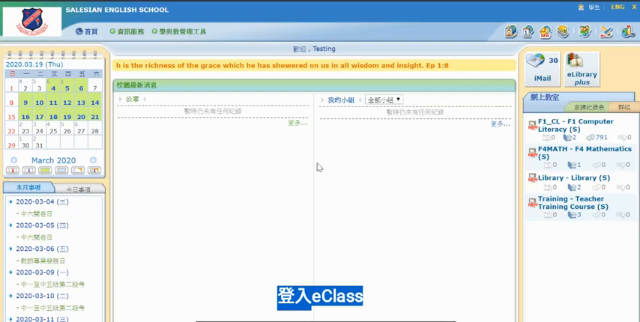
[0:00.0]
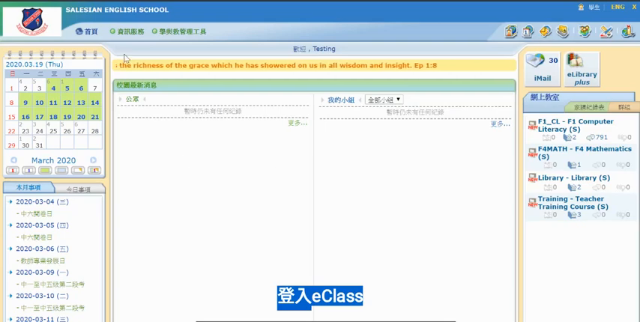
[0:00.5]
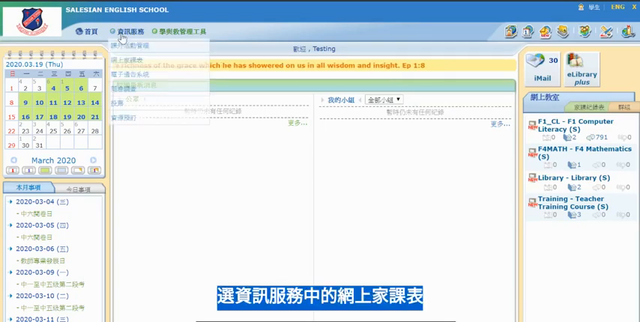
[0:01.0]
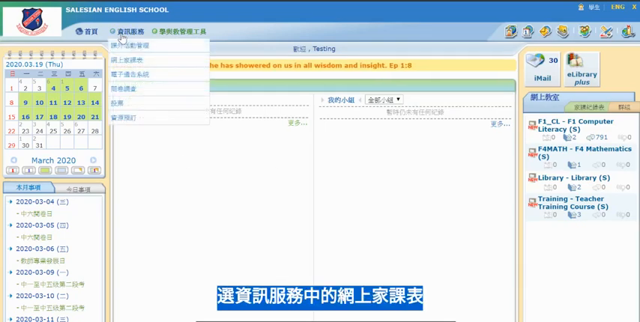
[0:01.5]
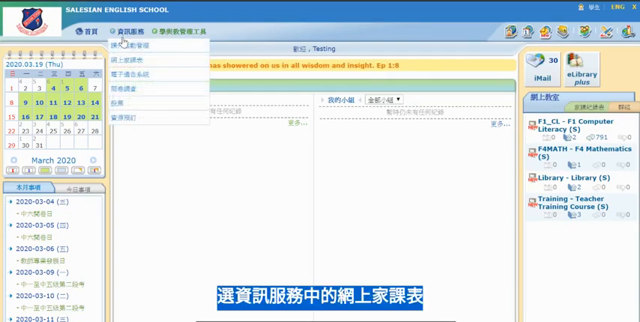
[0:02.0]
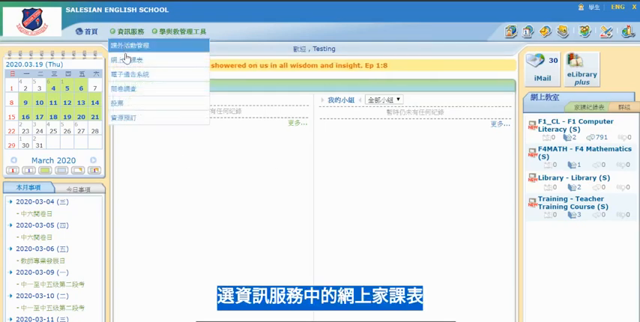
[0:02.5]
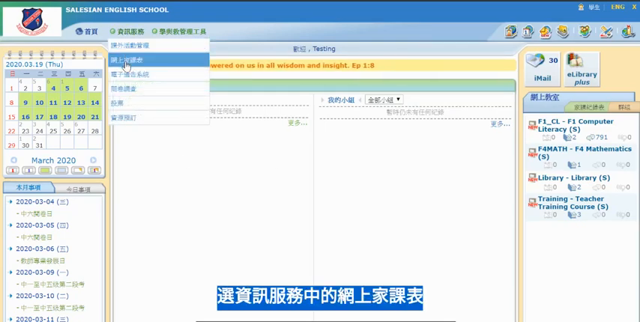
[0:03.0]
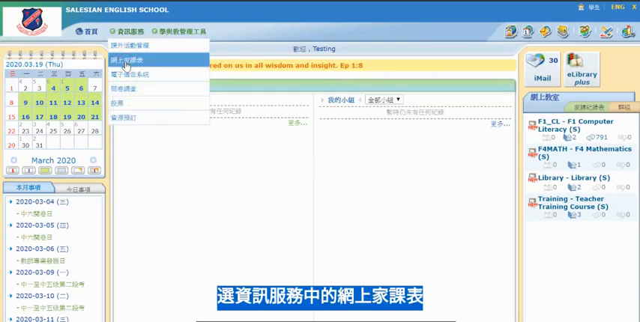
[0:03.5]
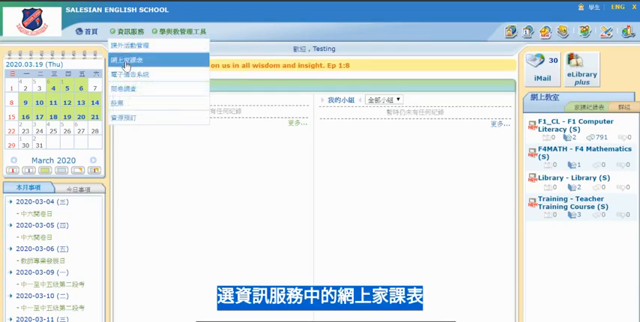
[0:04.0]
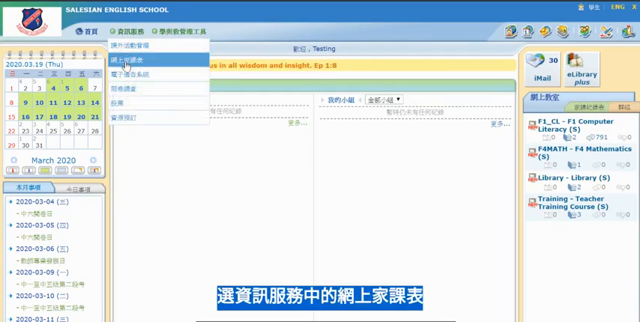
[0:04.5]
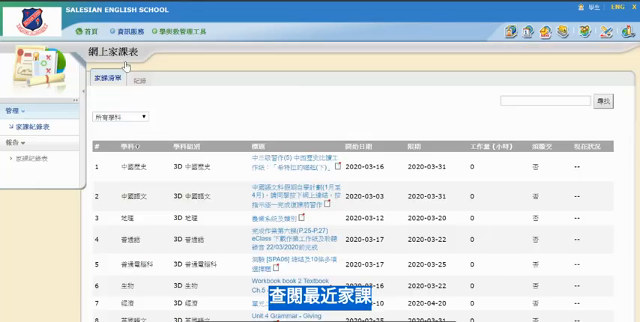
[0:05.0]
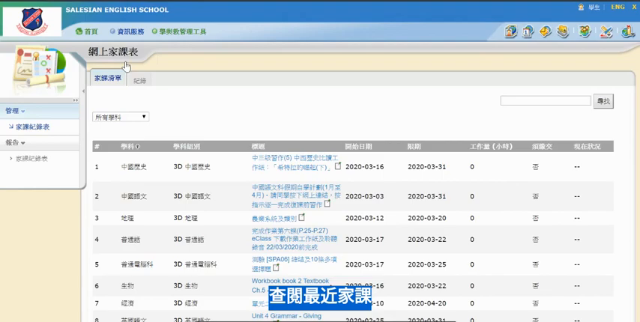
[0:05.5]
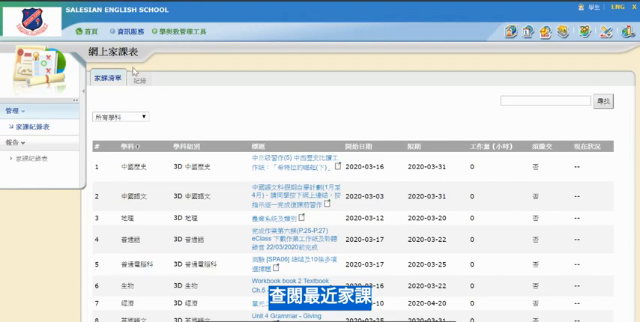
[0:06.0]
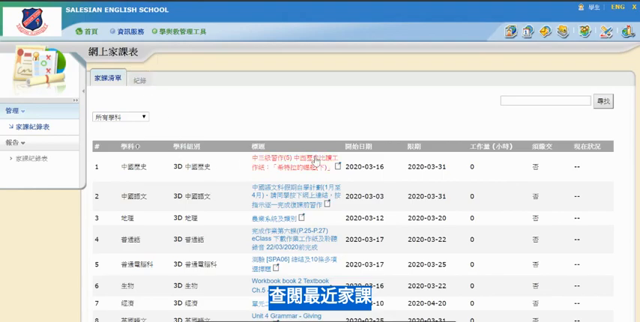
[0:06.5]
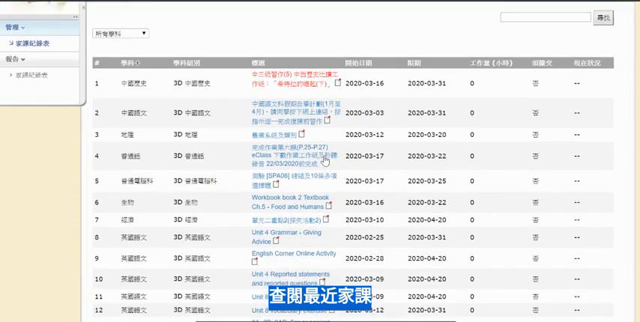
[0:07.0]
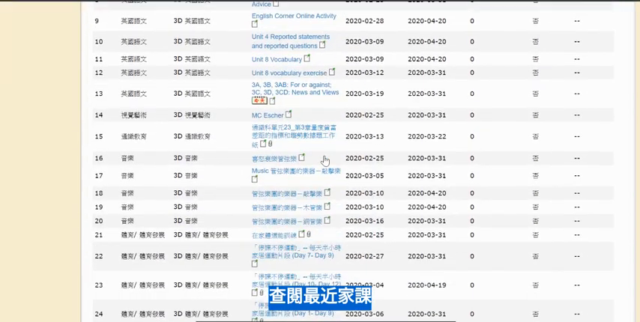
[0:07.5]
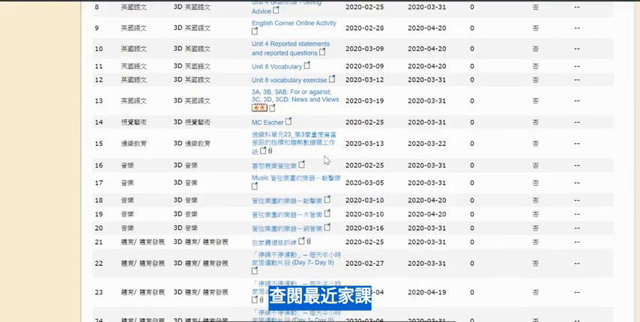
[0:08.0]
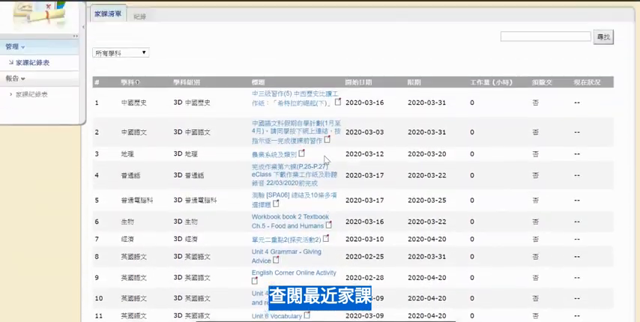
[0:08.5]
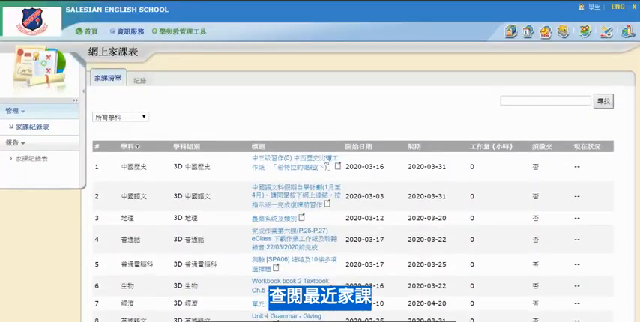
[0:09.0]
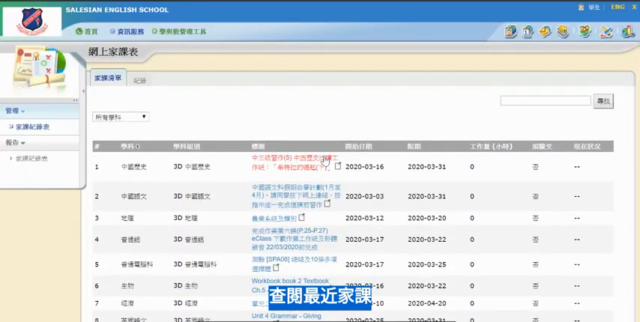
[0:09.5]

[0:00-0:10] A person is looking at some type of schooling app, with "Salesian English School" at the top of the screen. The rest of the text, including the headings, captions and filenames, is in Chinese. The user goes to the top menu and sort of hovers over the second option, which brings down a drop-down menu. They select the second option from it, which takes them to a new page with a long list of files. The user sort of scrolls up and down, showing how many files there are.